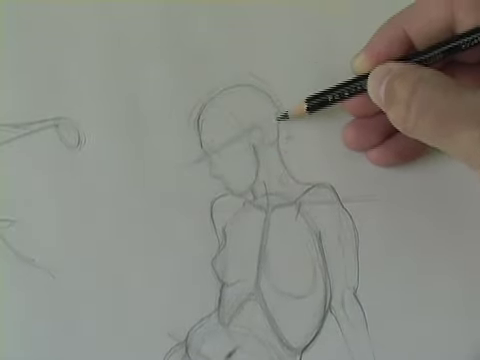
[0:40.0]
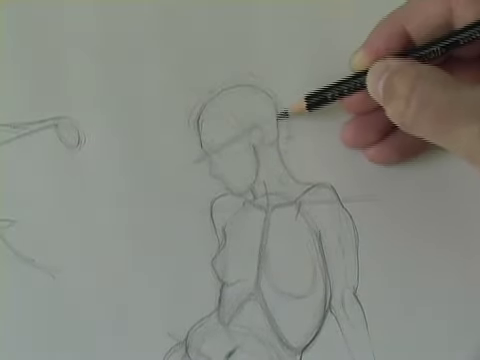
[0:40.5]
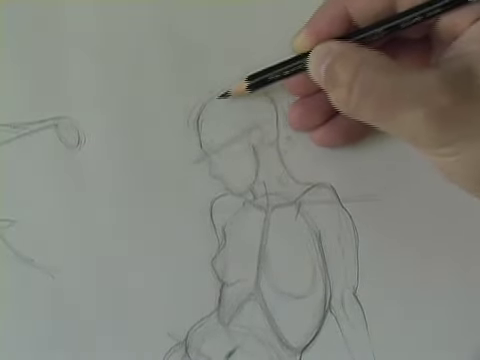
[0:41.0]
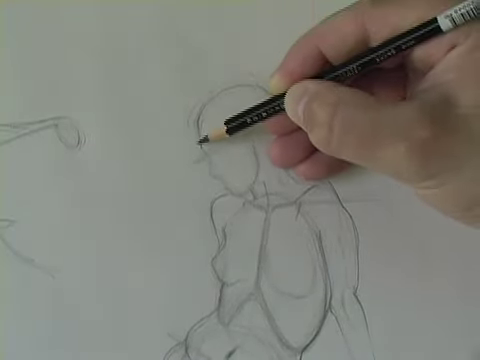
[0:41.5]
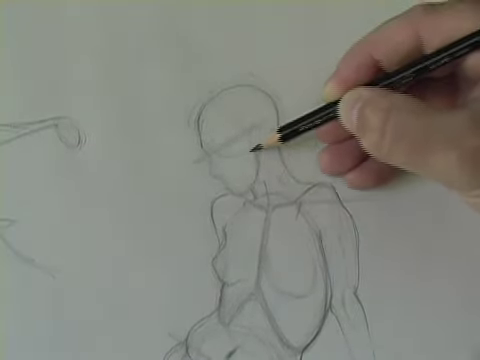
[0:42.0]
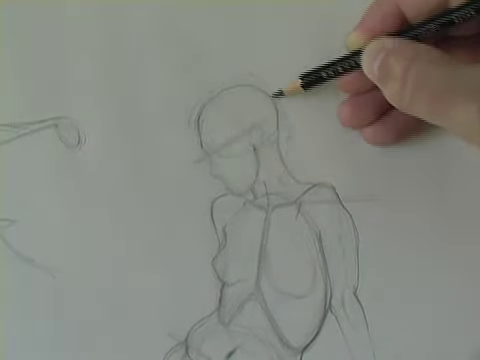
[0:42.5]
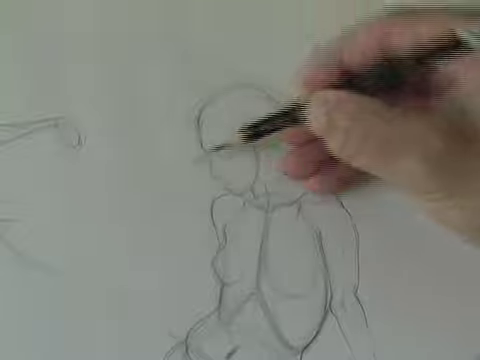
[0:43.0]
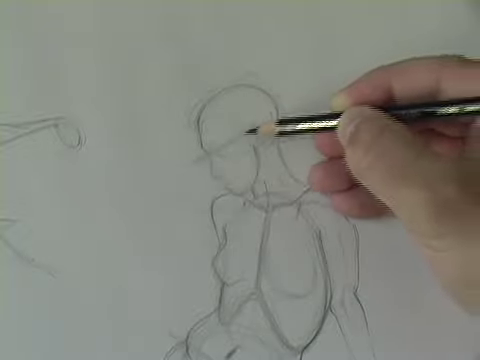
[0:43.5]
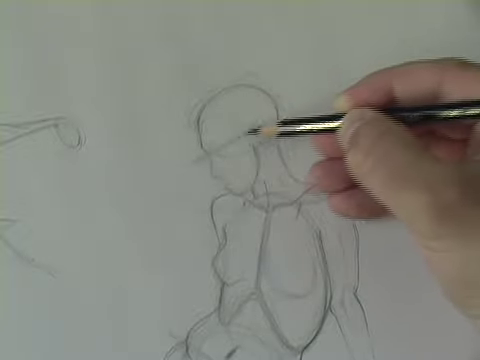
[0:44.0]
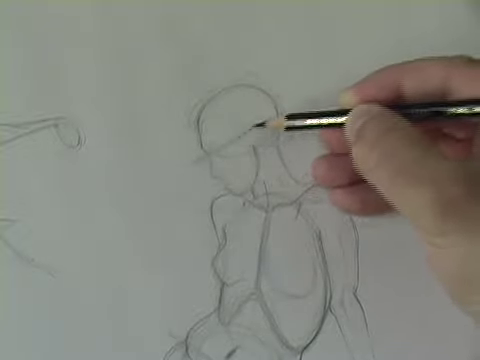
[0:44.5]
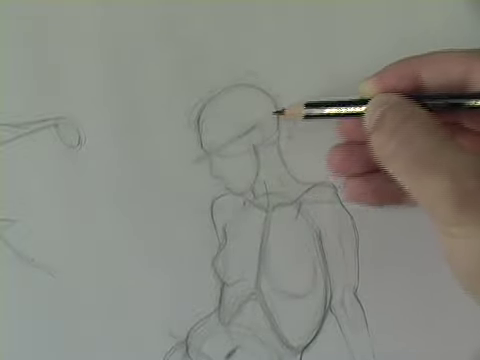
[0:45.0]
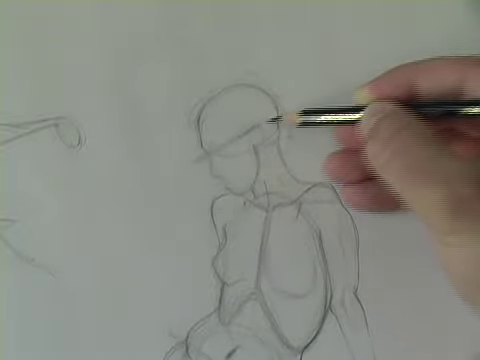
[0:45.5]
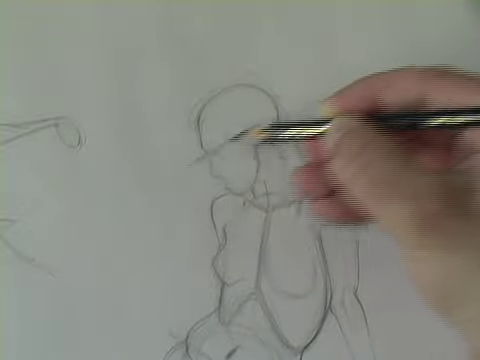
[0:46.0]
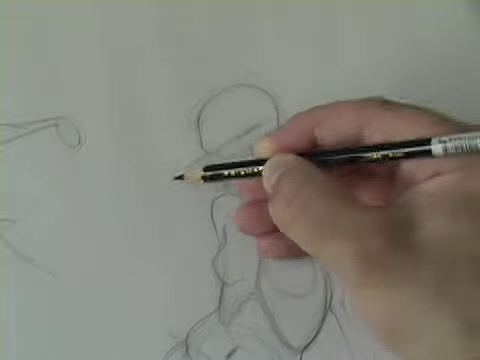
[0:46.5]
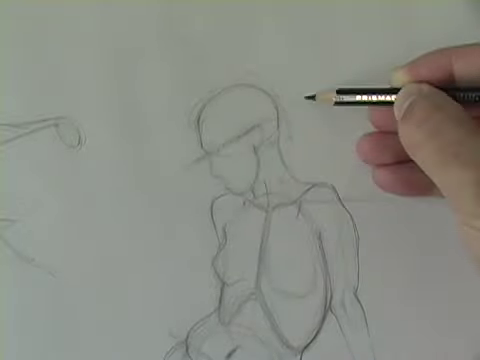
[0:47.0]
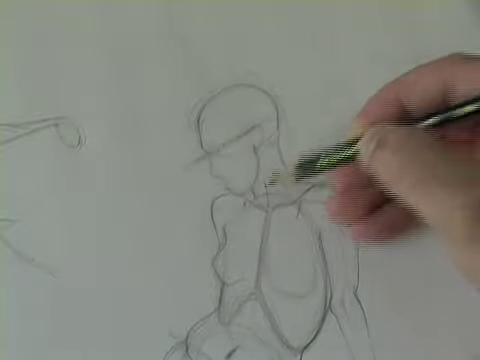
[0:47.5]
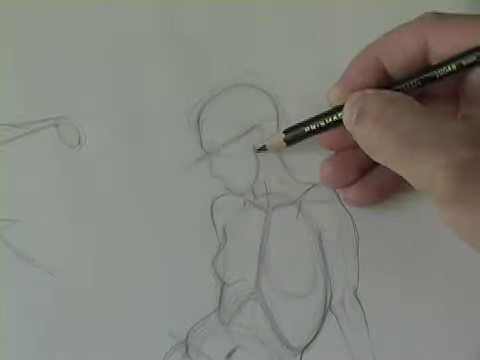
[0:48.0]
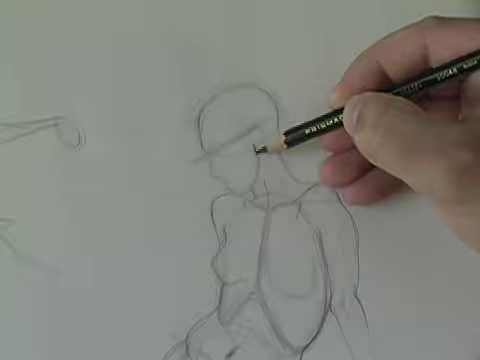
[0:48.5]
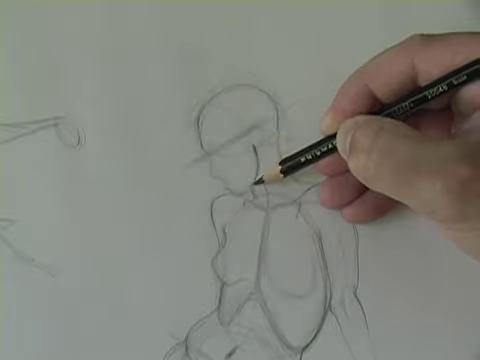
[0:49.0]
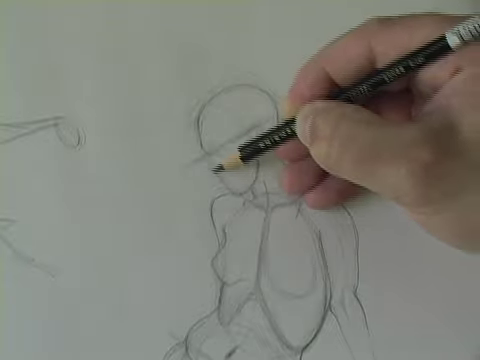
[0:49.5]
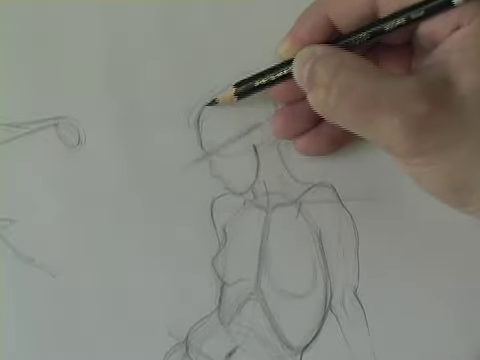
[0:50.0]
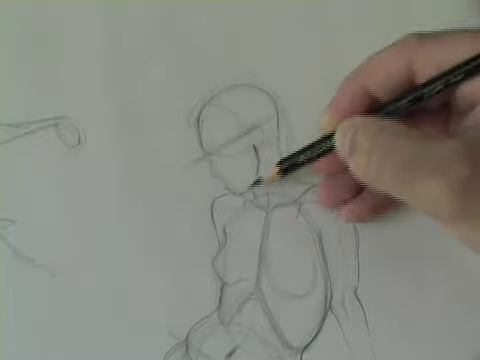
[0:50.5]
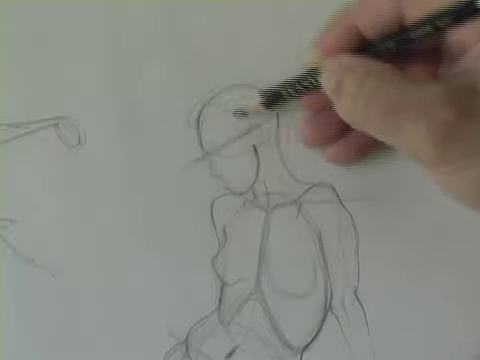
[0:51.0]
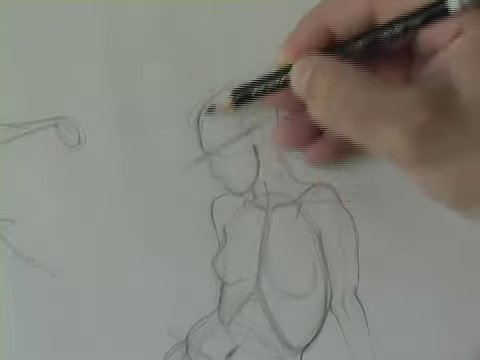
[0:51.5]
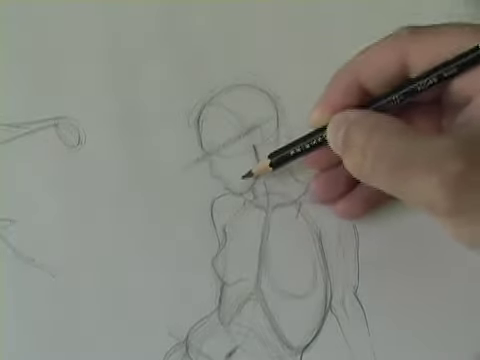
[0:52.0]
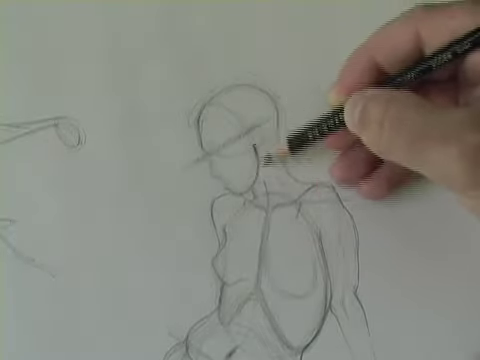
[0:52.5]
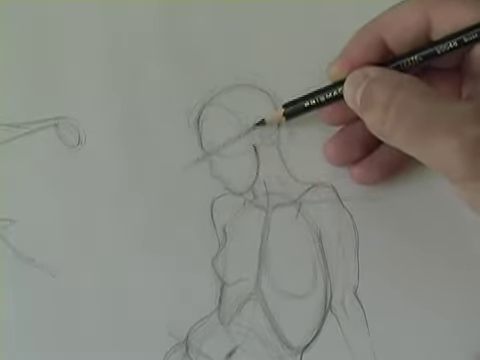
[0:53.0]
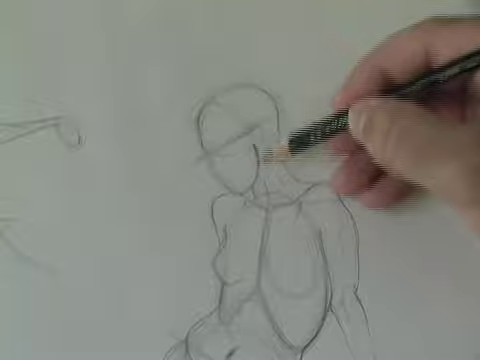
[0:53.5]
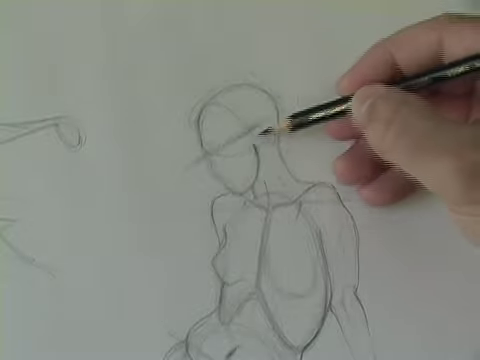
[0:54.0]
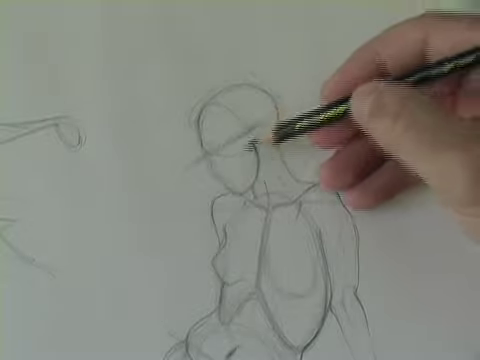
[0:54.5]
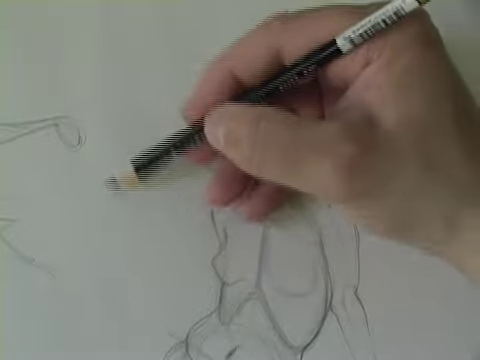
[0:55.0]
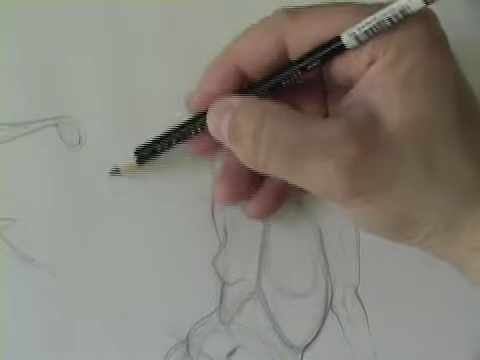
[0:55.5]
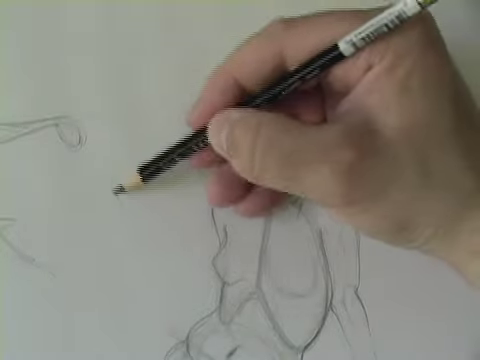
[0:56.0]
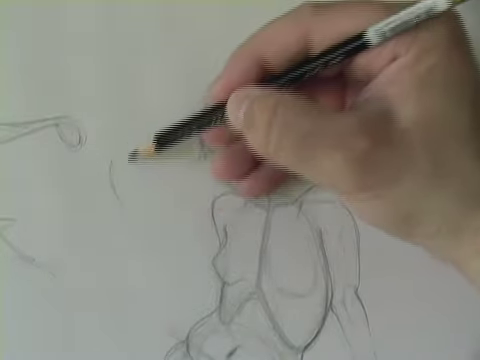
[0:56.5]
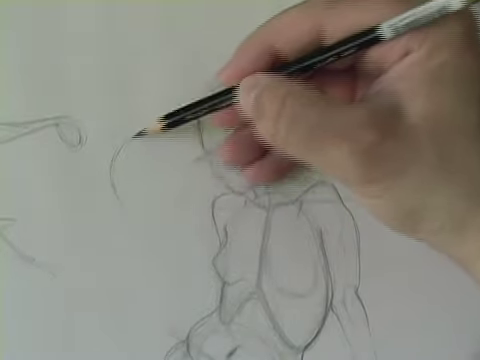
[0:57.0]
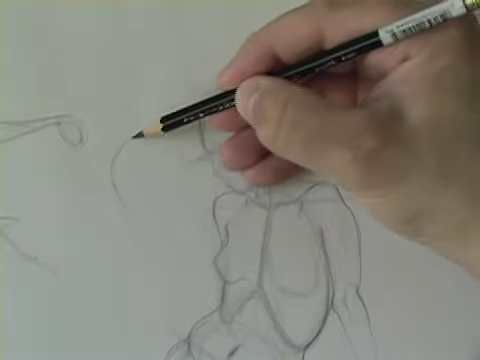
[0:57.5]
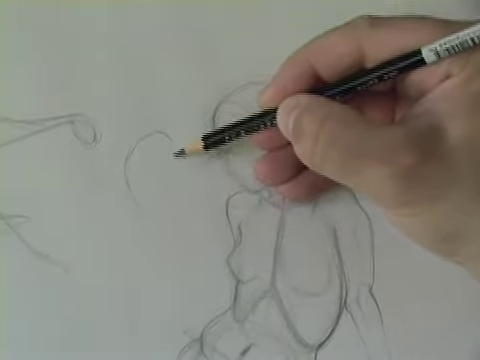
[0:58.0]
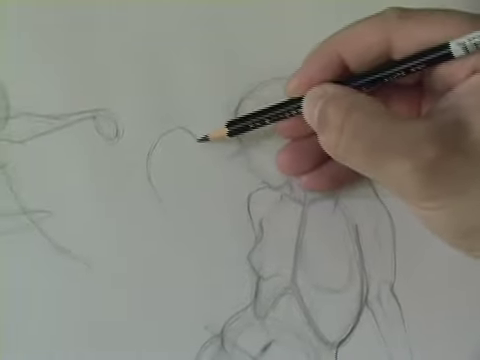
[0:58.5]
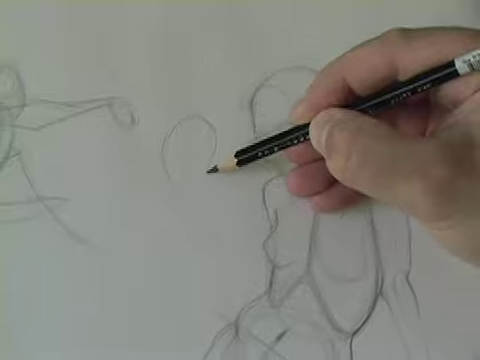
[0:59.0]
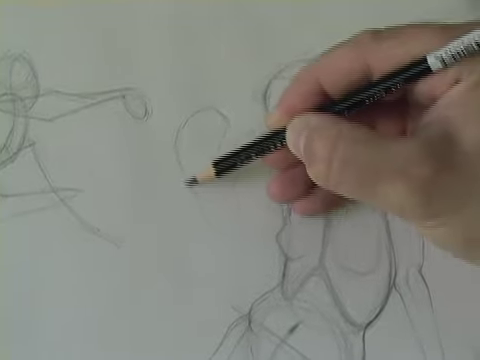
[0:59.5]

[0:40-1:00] The artist paints around the humanoid figure, which is a woman judging by the torso. A line passes right through the area where the eyes will be. The jaw and face area are enhanced to indicate the limit of the face, and the left part of the drawing shows how curvy the face should be. Another drawing is on the left of the humanoid, with a hand right next to it on the left side, and the left figure seems to have some kind of dress or sleeve. Specific lines drawn on the torso of the current figure suggest clothes might be designed on it. In the hand, points are marked where it can twist, move and contract, so that it looks more alive.